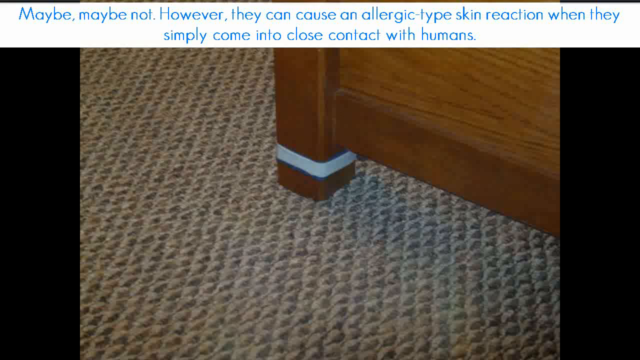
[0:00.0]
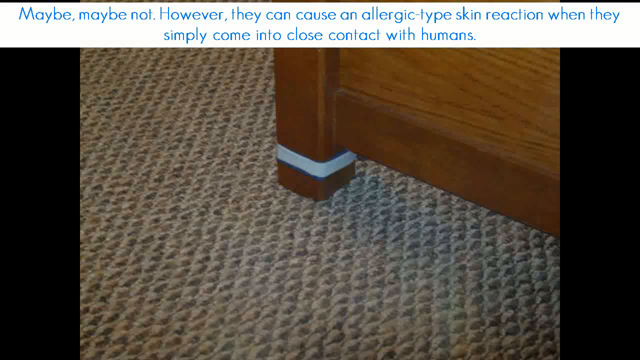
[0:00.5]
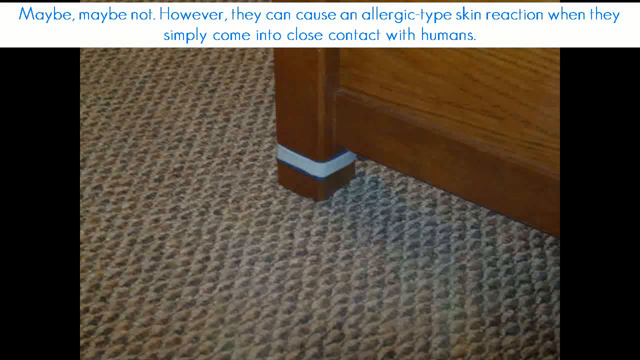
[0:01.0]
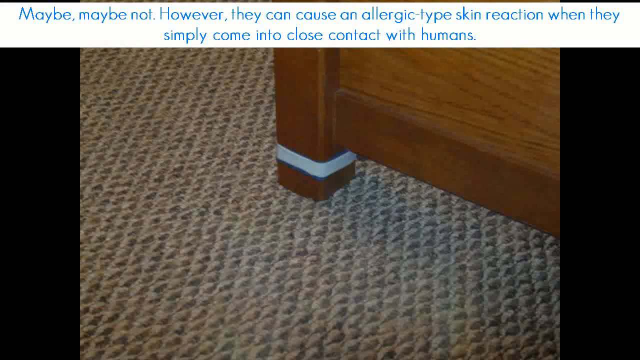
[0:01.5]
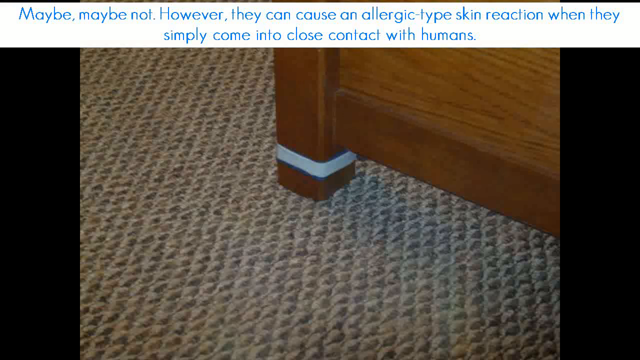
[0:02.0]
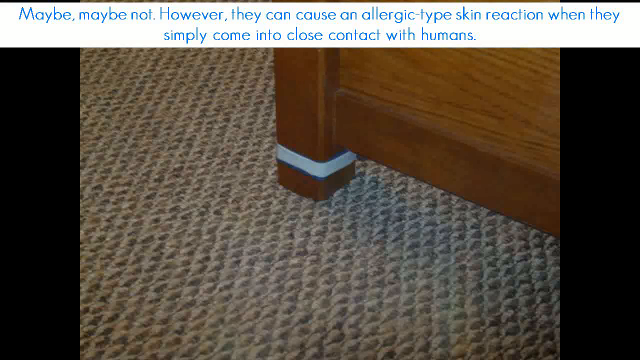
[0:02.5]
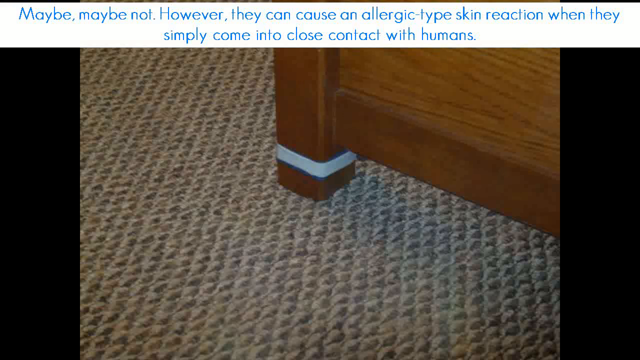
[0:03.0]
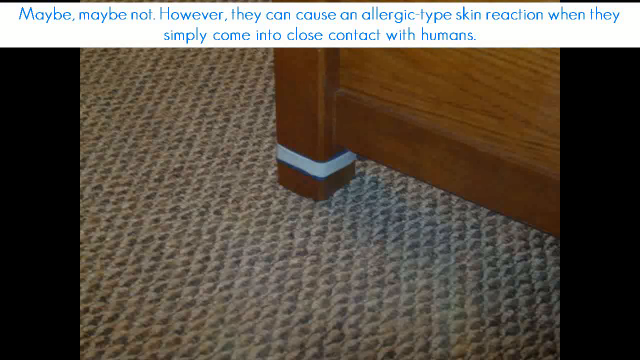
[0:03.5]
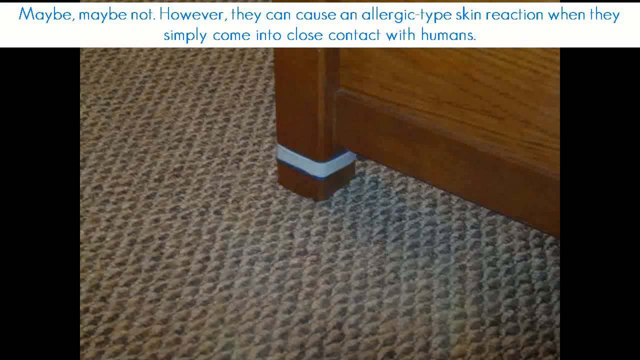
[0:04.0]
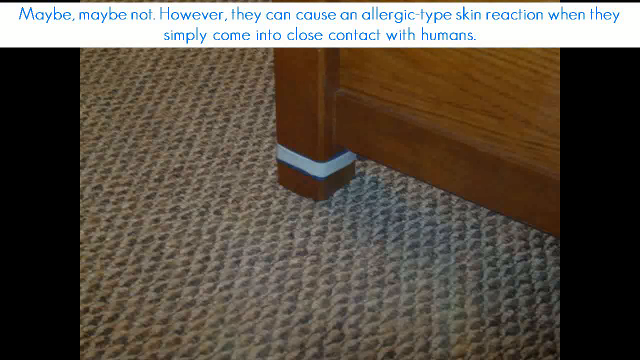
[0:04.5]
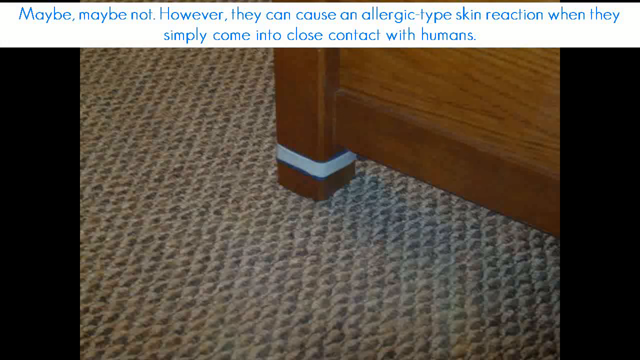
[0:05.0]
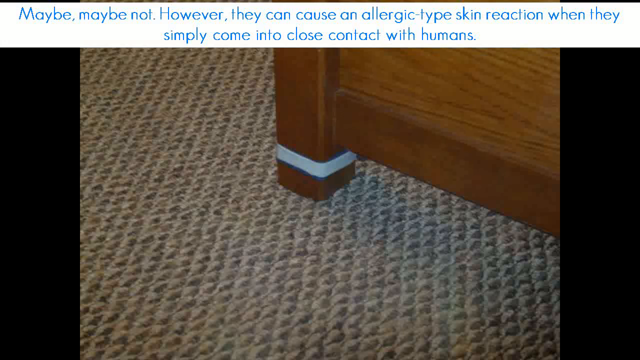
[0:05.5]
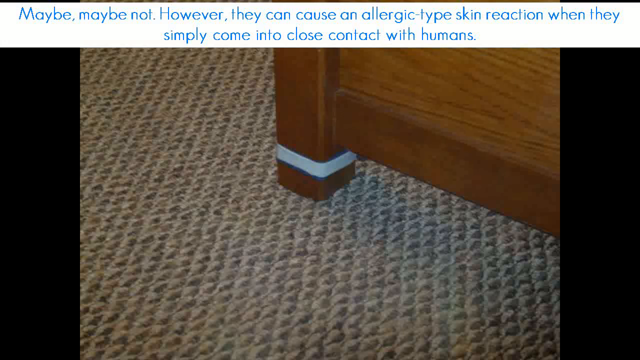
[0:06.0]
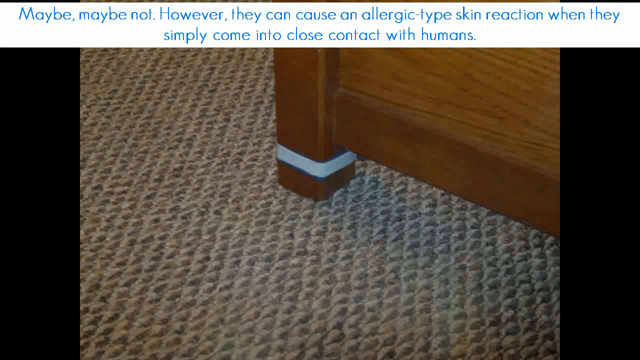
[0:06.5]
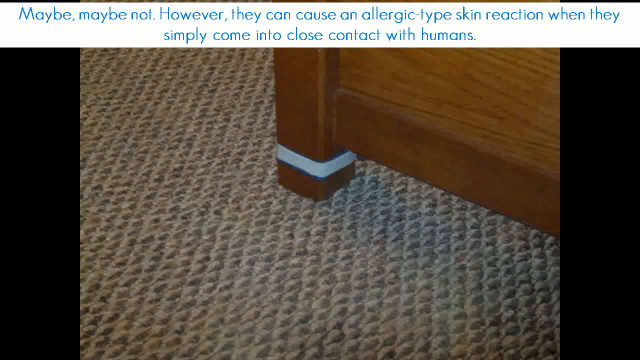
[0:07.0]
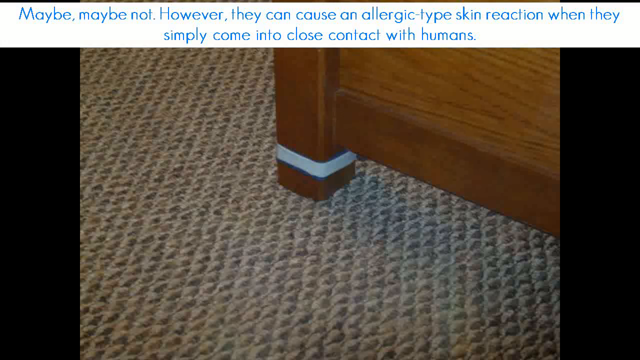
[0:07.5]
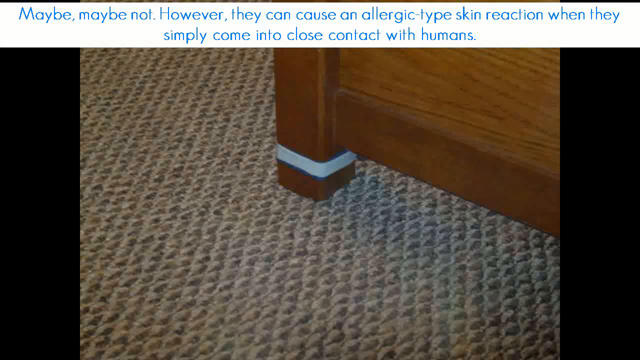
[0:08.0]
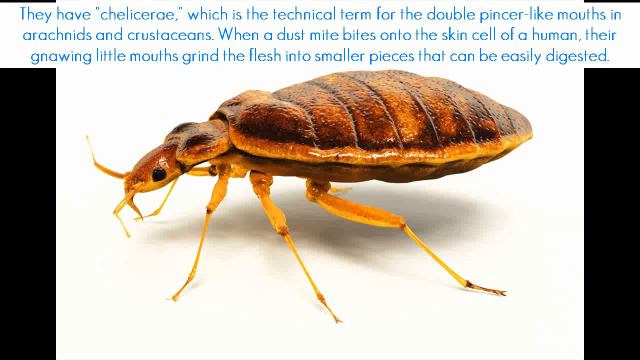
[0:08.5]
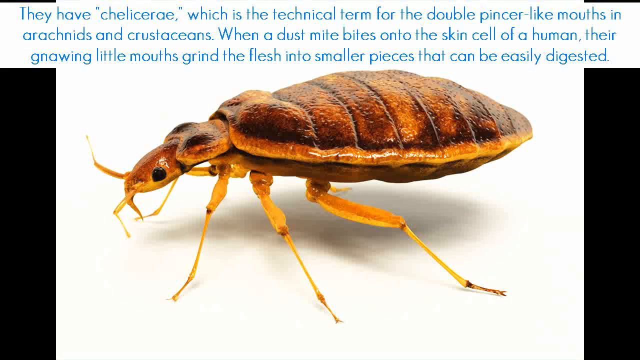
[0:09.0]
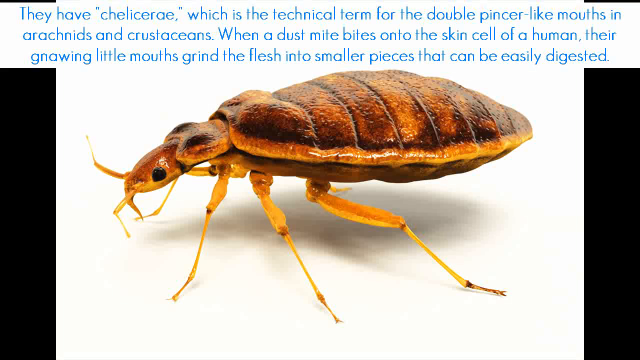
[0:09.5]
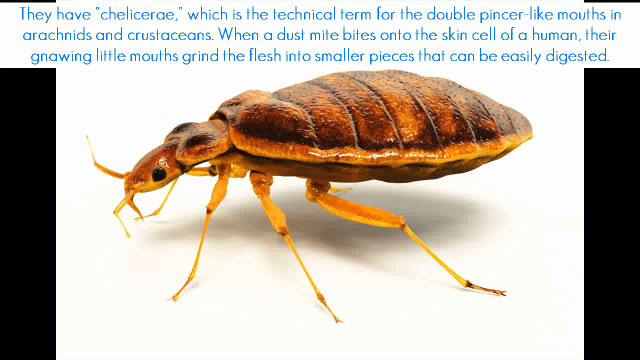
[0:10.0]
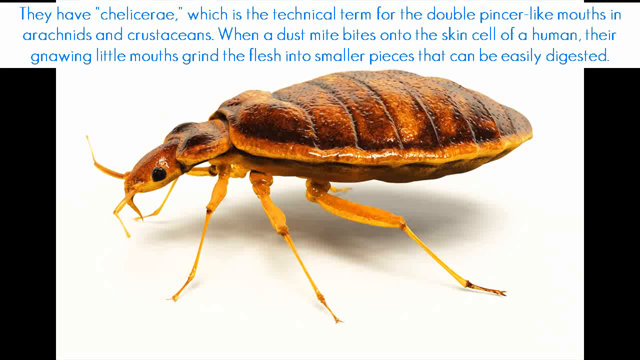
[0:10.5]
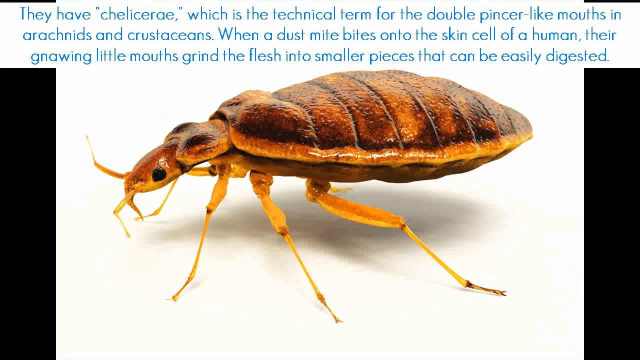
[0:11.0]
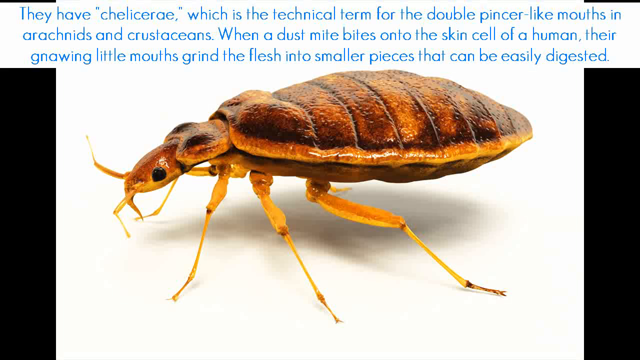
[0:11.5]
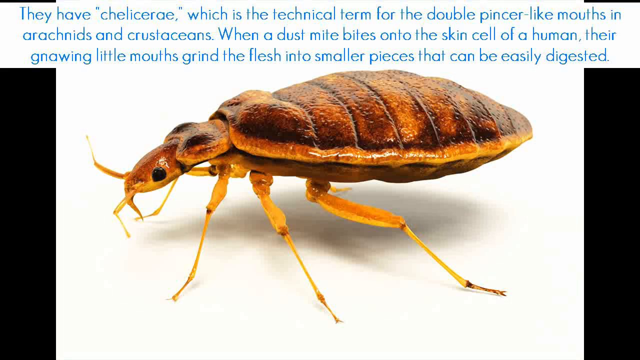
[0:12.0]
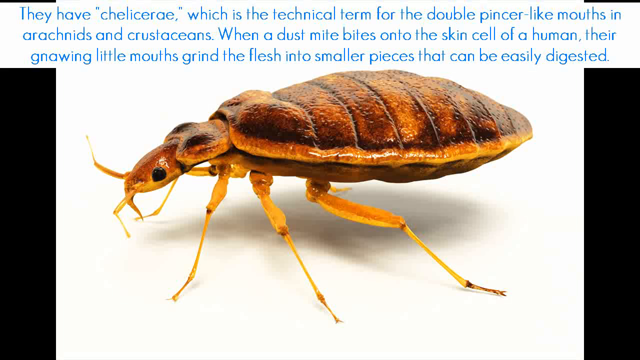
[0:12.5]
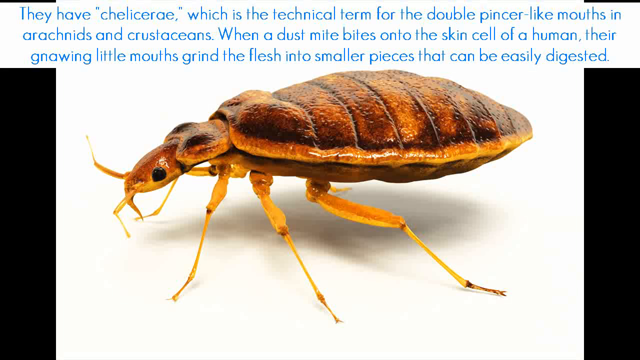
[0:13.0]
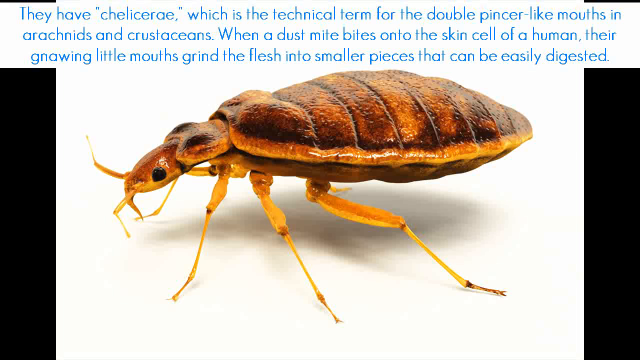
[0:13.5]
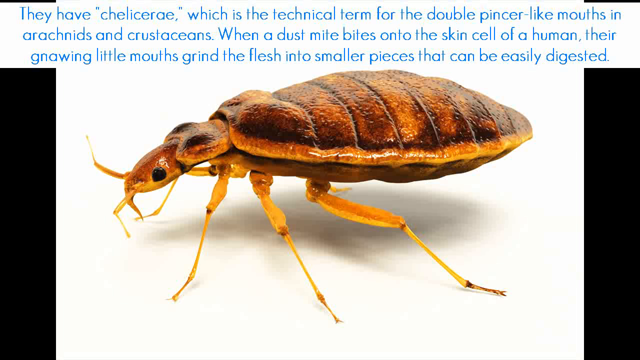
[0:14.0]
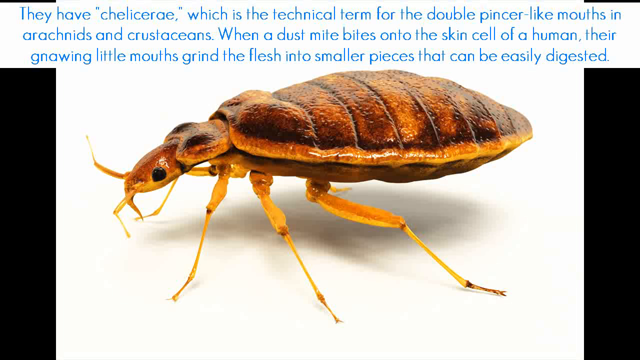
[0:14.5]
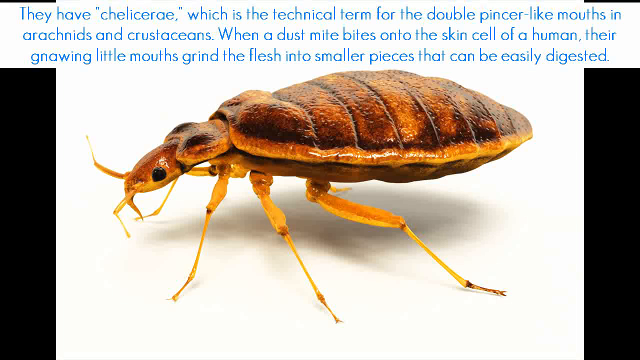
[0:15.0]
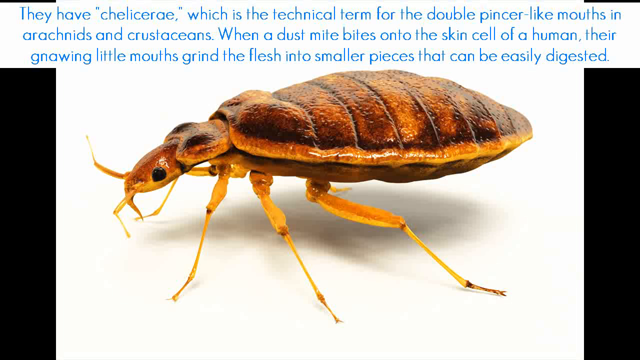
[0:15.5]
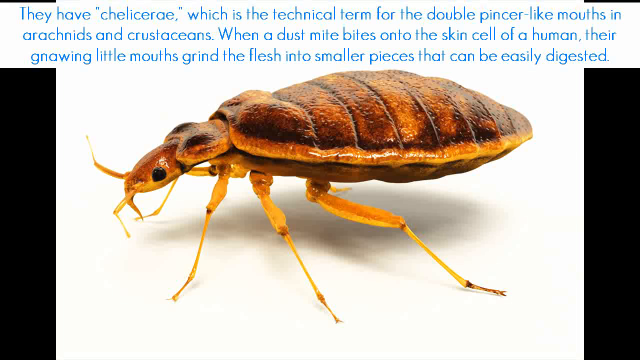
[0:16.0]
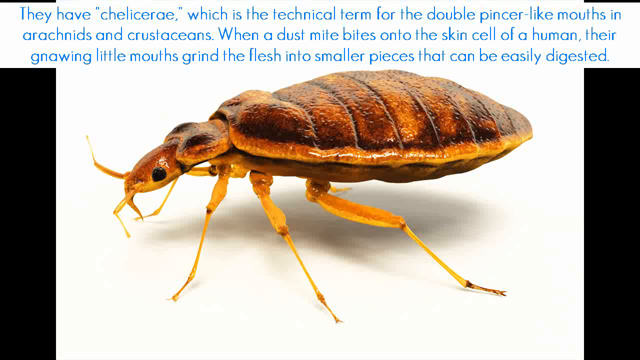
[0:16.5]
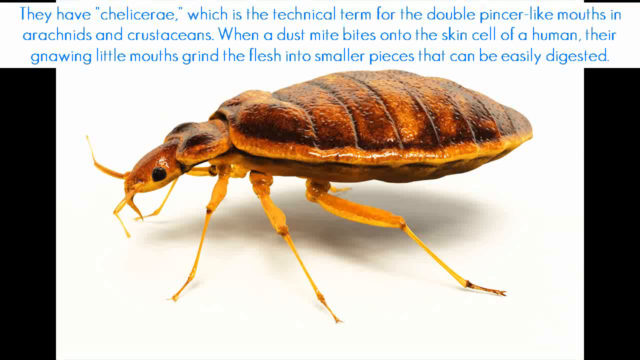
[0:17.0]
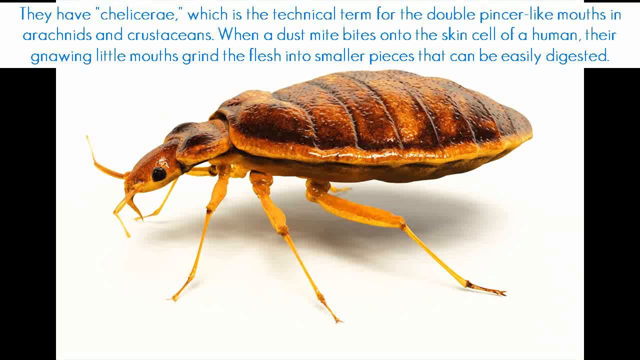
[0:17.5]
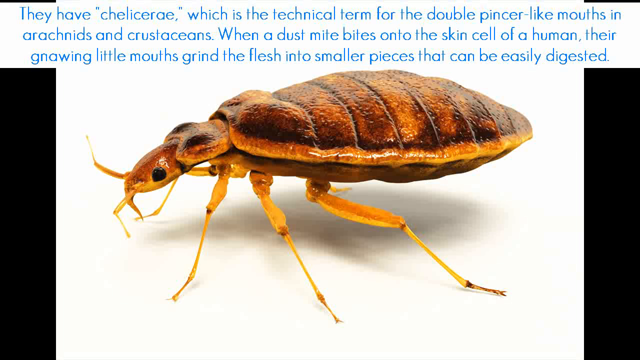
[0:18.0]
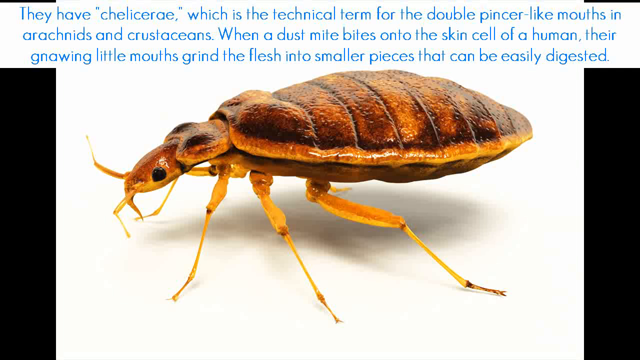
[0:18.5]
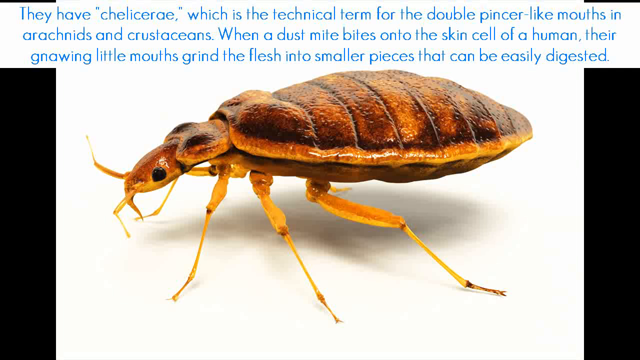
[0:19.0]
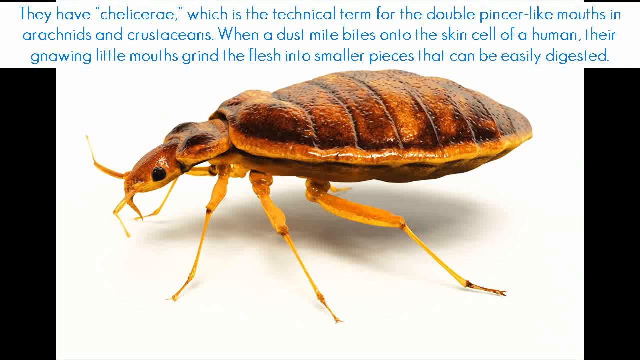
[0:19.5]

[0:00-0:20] The video opens on a carpet and a piece of wood furniture that may be a bed or possibly some type of dresser. A leg is visible along with the bottom part of what could be a headboard, a footboard or part of a dresser, and a little white band that looks out of place is around it, possibly plastic or a rubber band. Text at the top reads "maybe, maybe not." Further text says "however they can cause an allergic type skin reaction when they simply come in close contact with humans," without yet naming the creature. The video then shows what looks like a tick, though it could be a bedbug, with text about the pincers they have that can bite into humans and cause that allergic-type reaction. A small picture of the brown creature appears, along with some information about how they are built, and the text identifies them as dust mites.